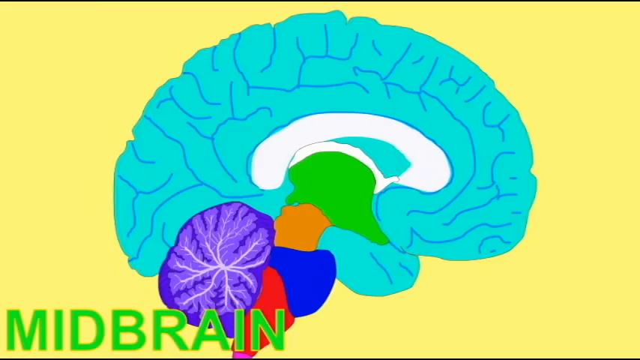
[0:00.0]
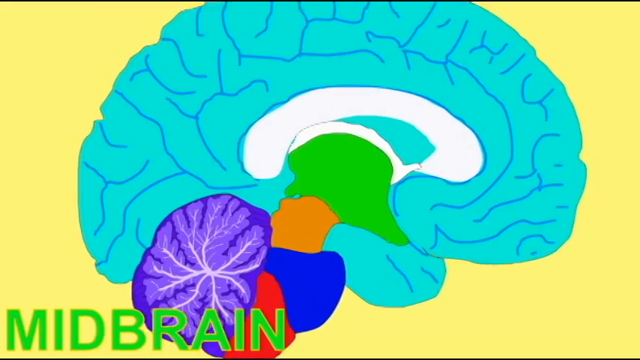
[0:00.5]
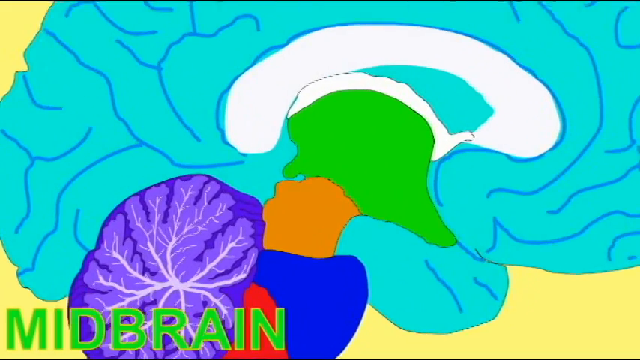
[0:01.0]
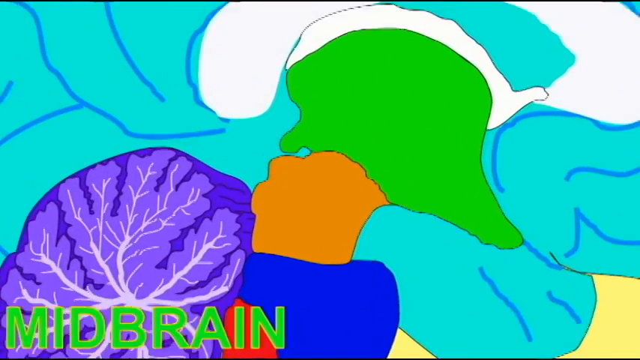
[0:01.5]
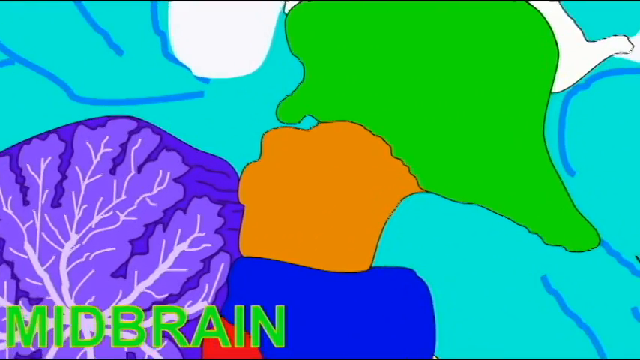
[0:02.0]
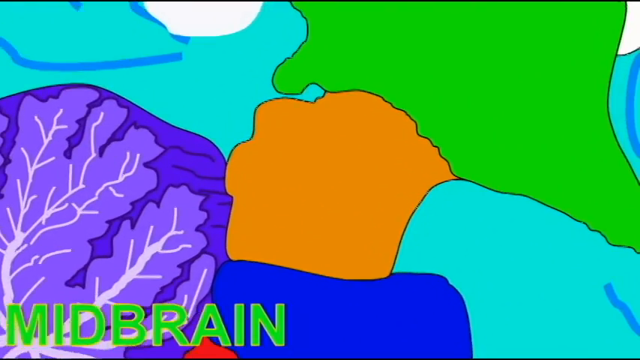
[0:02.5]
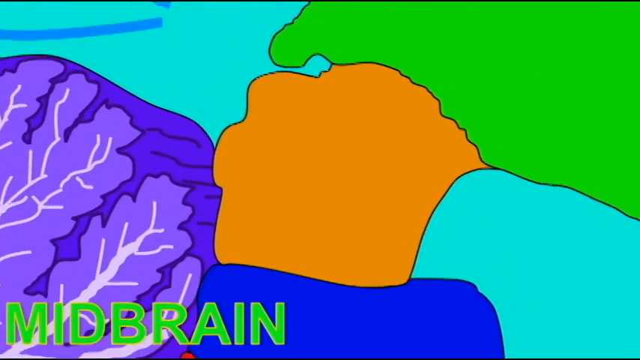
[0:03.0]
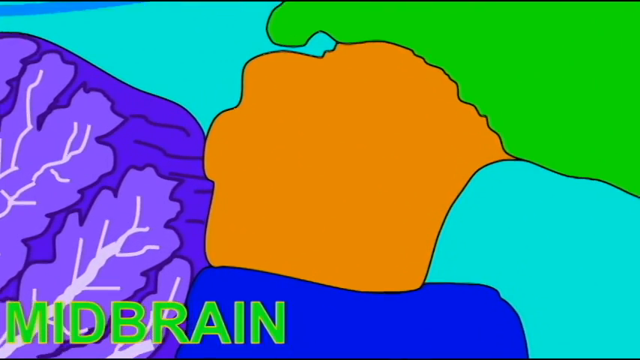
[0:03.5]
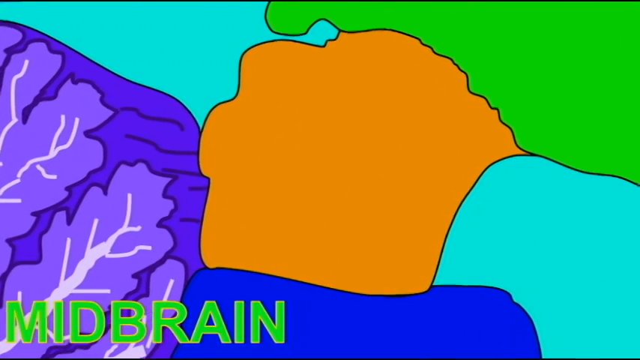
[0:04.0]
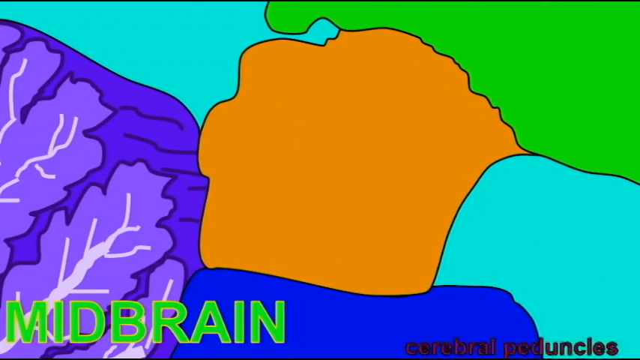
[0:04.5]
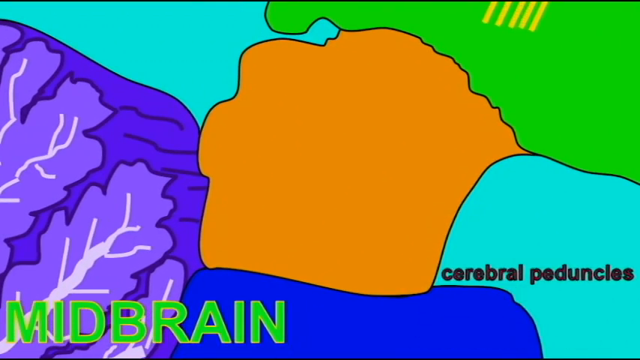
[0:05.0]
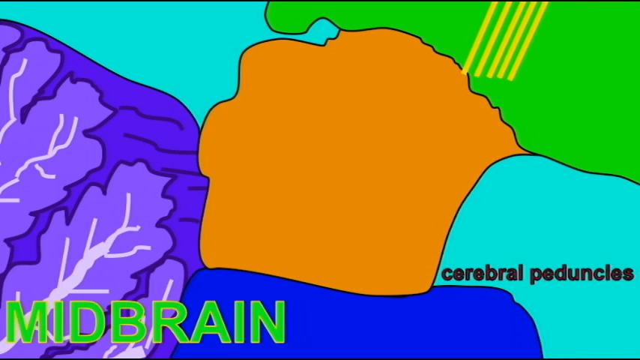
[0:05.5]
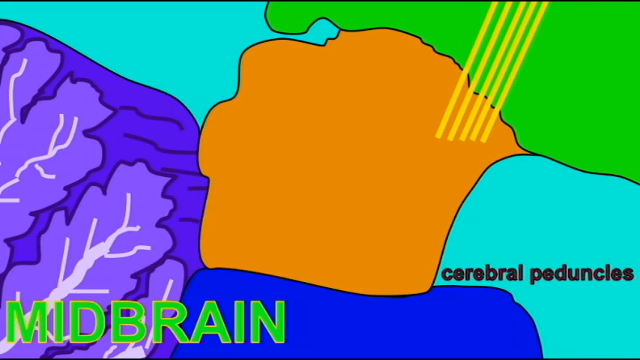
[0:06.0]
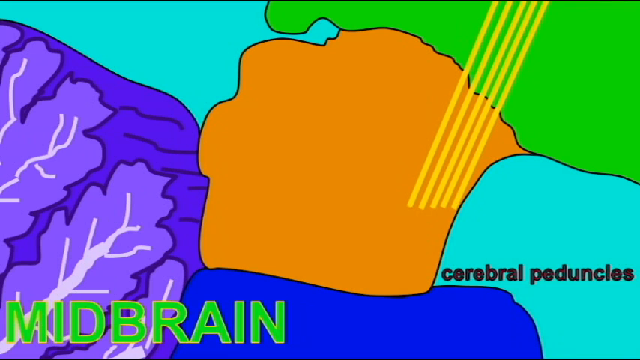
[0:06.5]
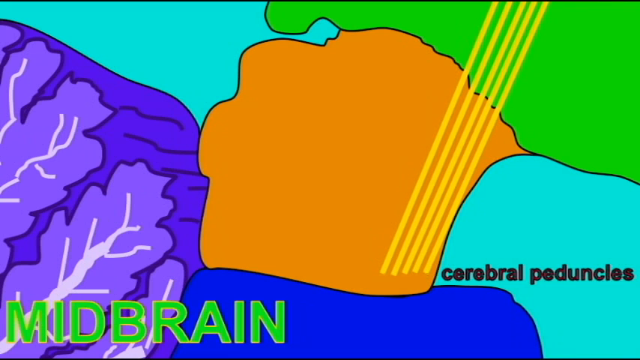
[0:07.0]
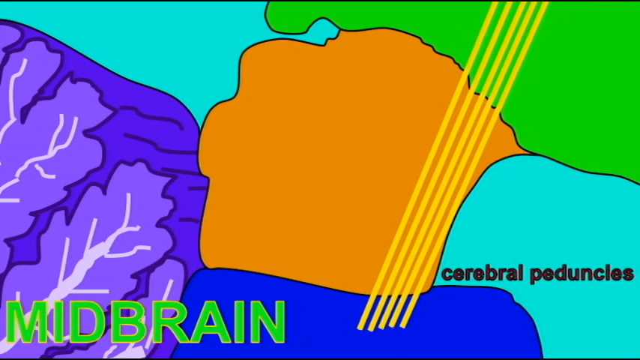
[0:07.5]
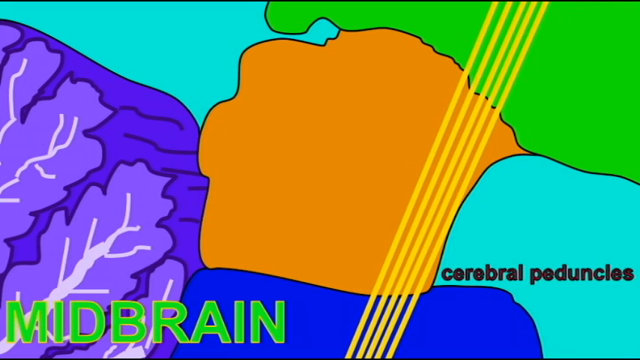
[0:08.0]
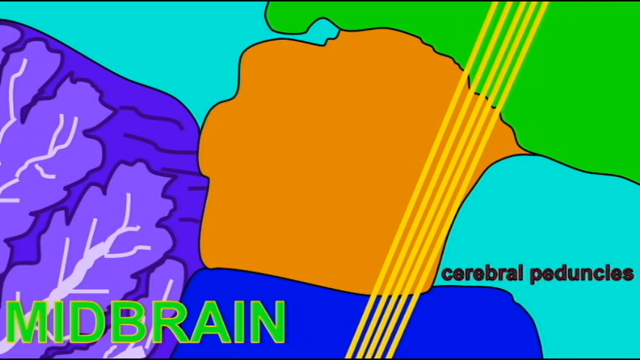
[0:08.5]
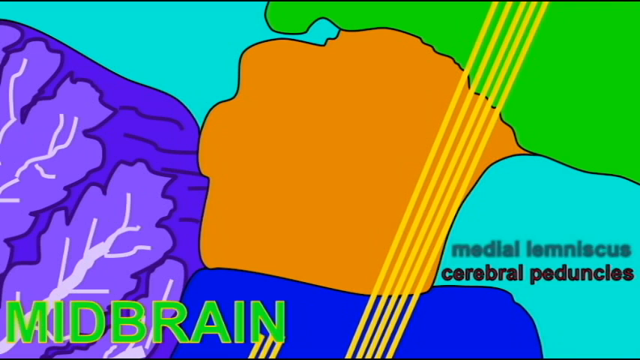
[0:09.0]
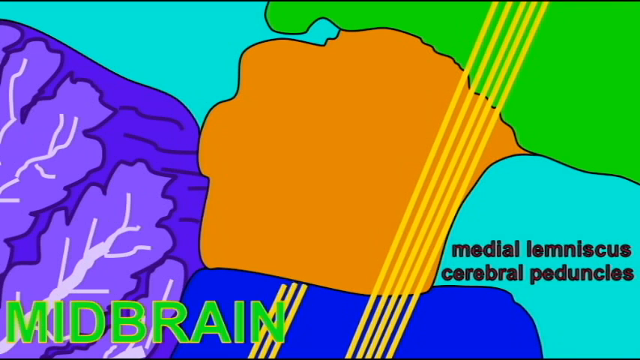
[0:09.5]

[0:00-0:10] A brain is shown against a yellow background. The top part of the brain is colored bluish, the middle part is white, a third part is somewhat greenish, and there is also a purple-bluish part. The word "midbrain" appears on the screen. The view then zooms in to show another part of the brain, colored in what looks like yellow, and the words "cerebral peduncles" appear on the screen.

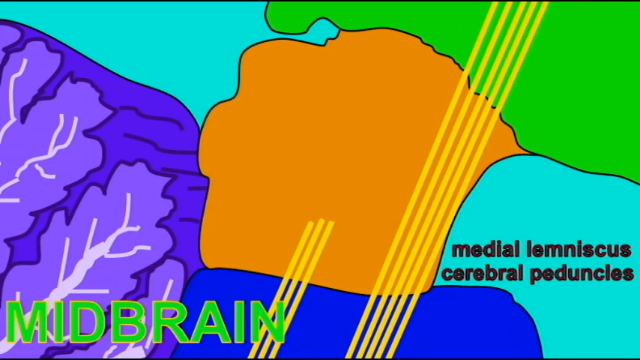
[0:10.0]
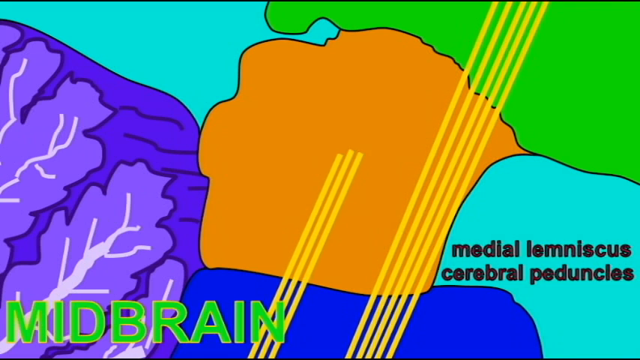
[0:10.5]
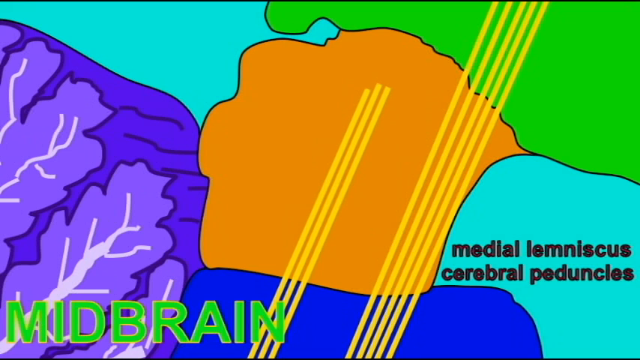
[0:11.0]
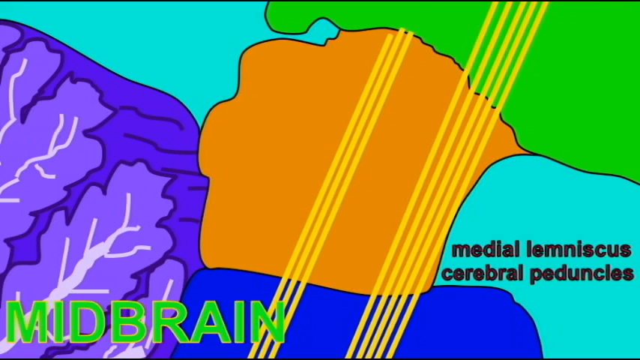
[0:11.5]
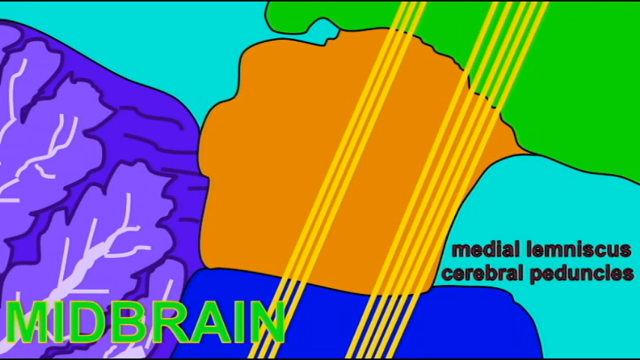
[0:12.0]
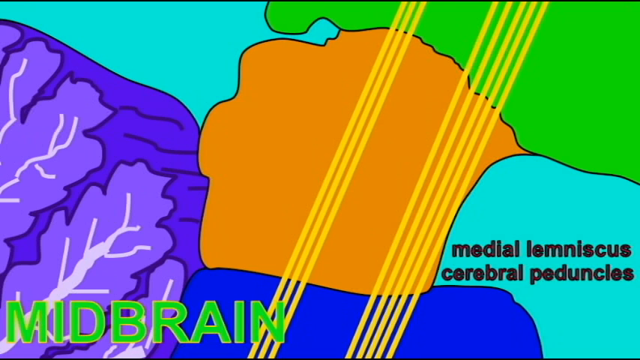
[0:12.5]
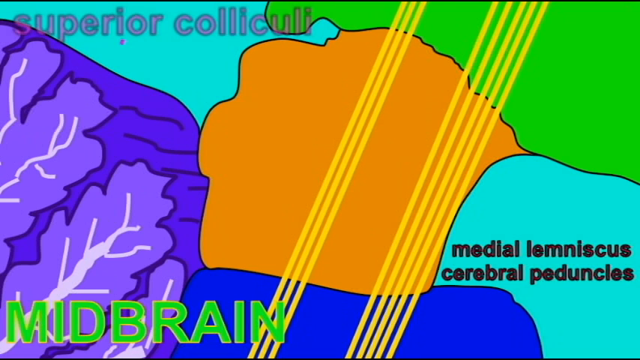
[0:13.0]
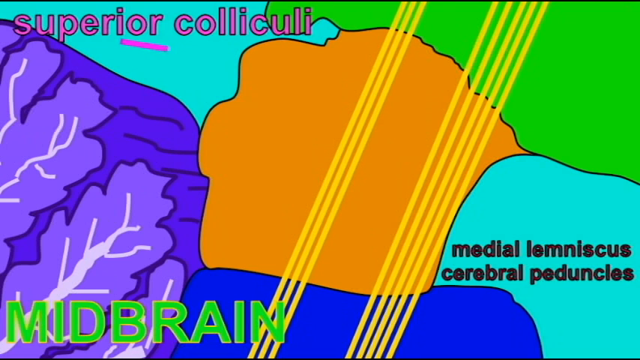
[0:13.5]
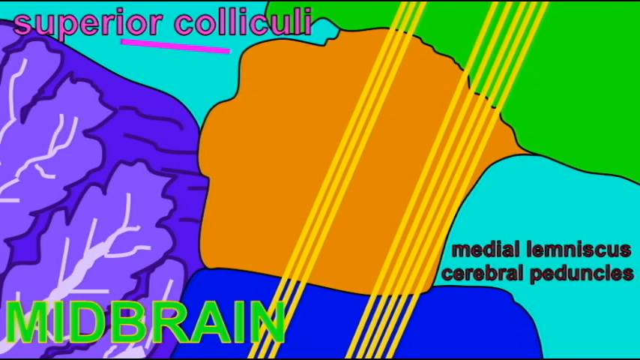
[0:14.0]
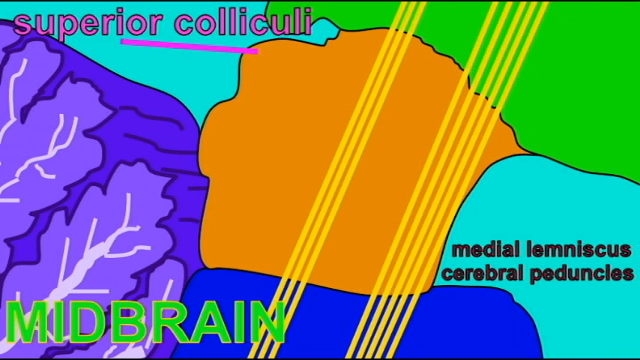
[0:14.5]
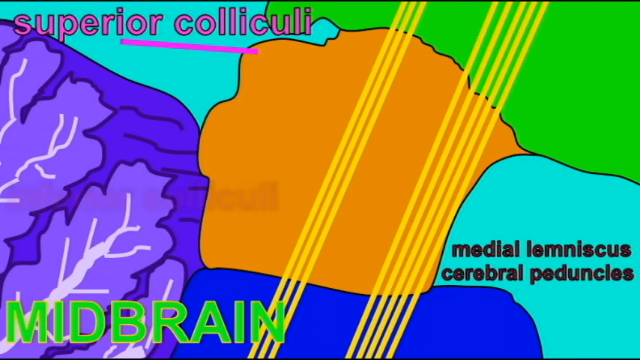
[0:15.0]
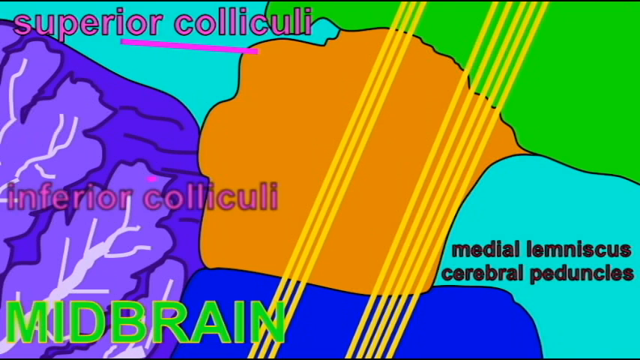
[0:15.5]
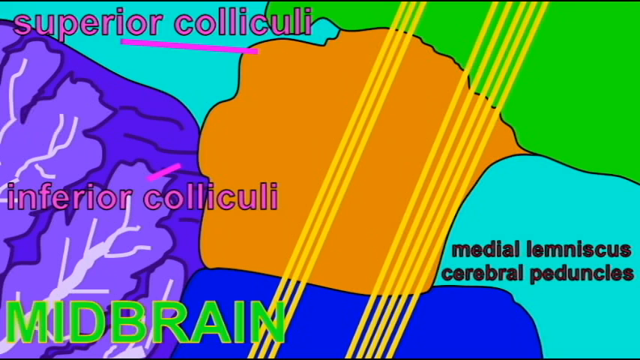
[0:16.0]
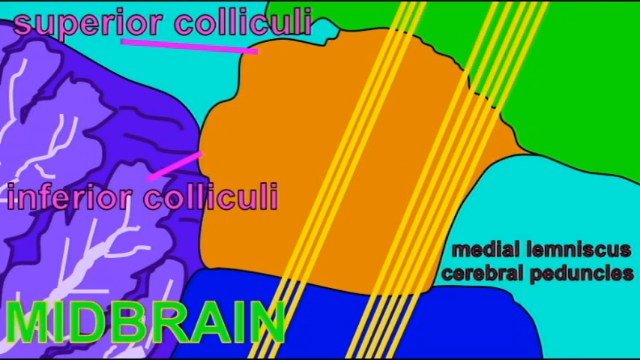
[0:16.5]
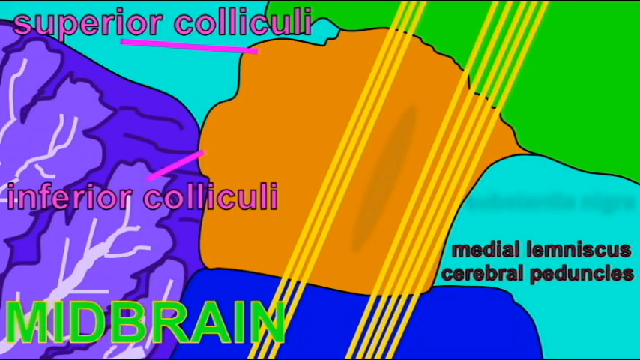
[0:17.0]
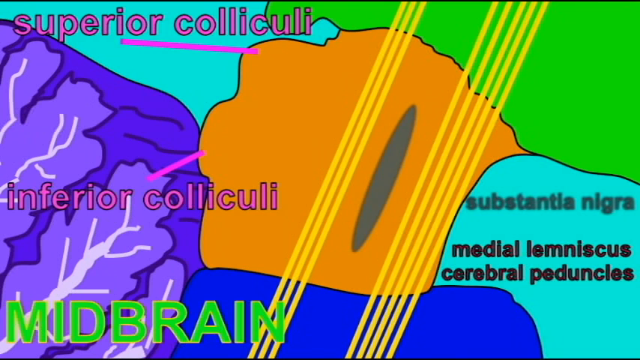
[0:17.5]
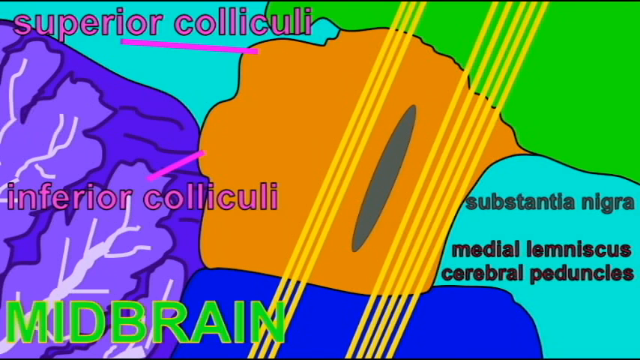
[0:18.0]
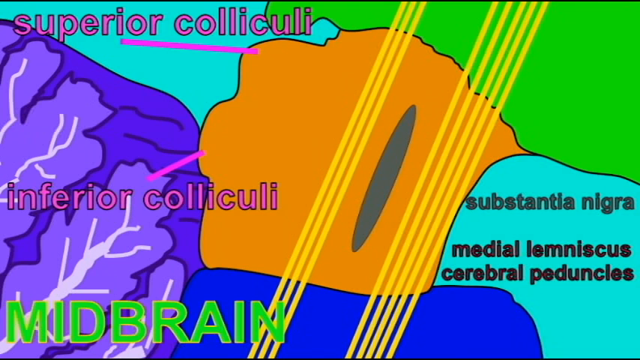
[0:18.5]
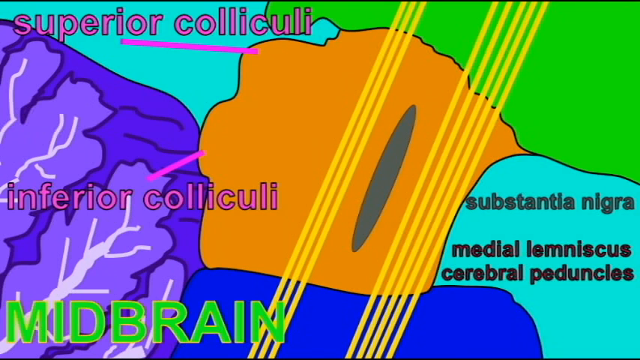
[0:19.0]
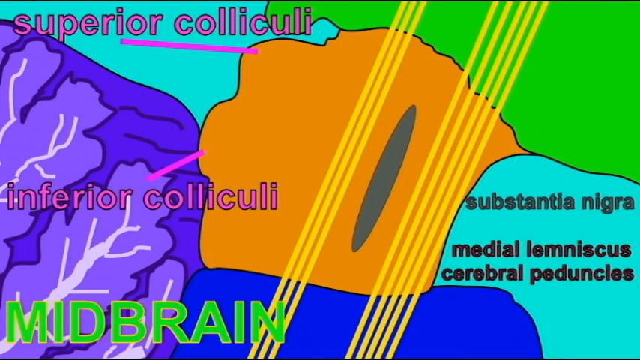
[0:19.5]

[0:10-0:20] The words "medical lemniscus" and "cerebral peduncles" are on the screen, along with yellow lines. Three other yellow lines go up from the left side toward the right side. A purple line then appears with the words "superior colliculi" written on it, and the words "inferior colliculi" also seem to point to somewhere on the brain. The "superior colliculi" label also seems to point to something on this part of the brain. An oval shape then appears between the yellow lines, and the words "substantia nigra" appear on the screen in gray, the same color as the oval shape.